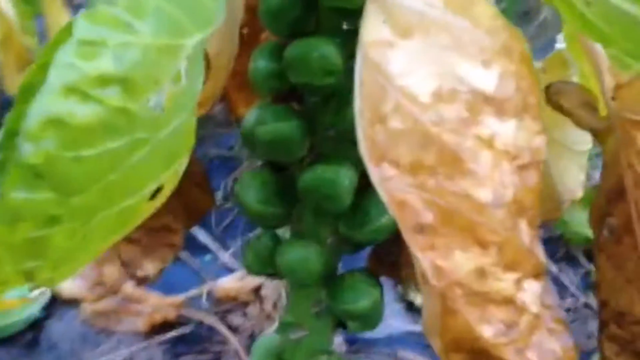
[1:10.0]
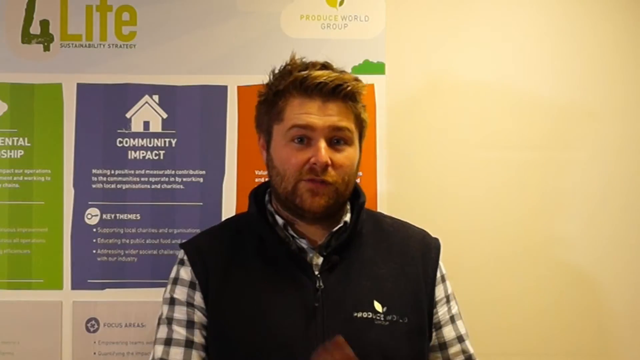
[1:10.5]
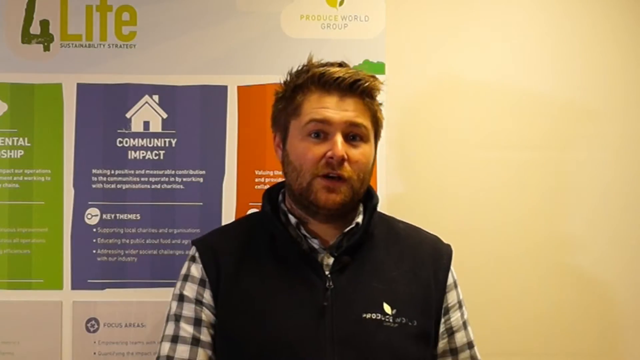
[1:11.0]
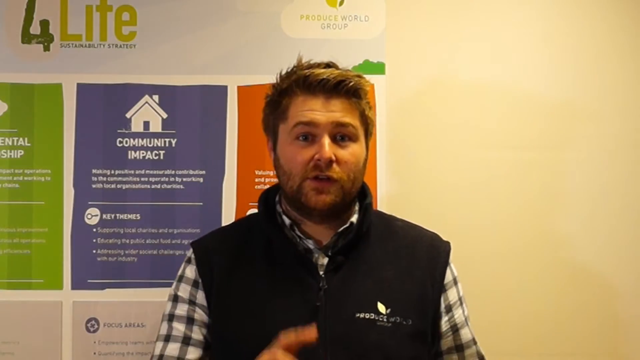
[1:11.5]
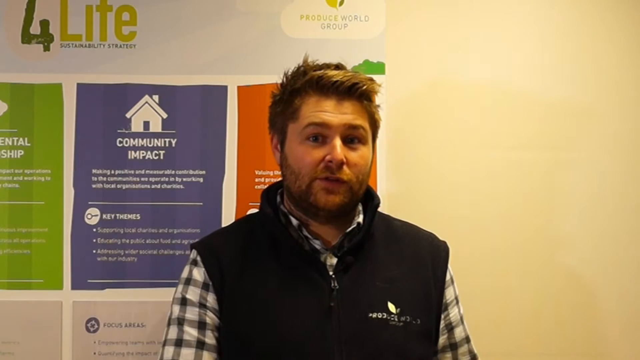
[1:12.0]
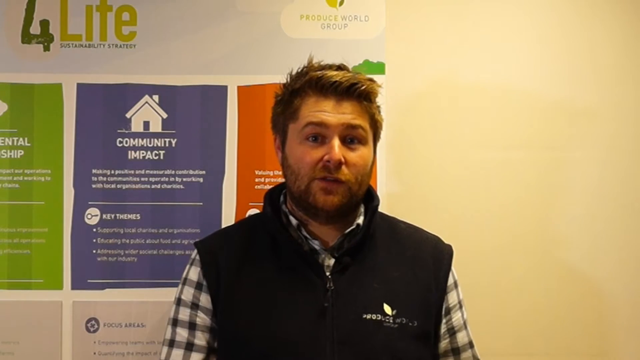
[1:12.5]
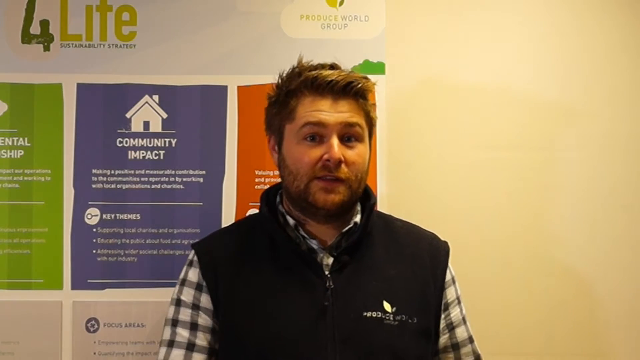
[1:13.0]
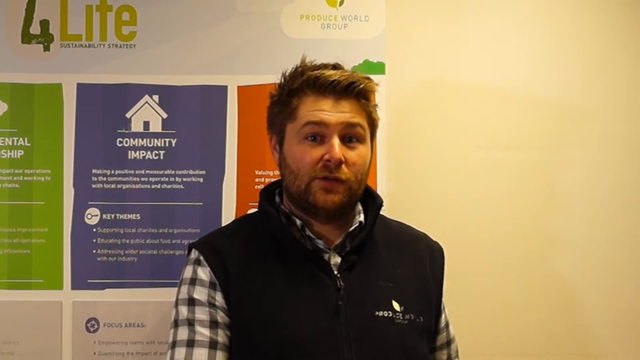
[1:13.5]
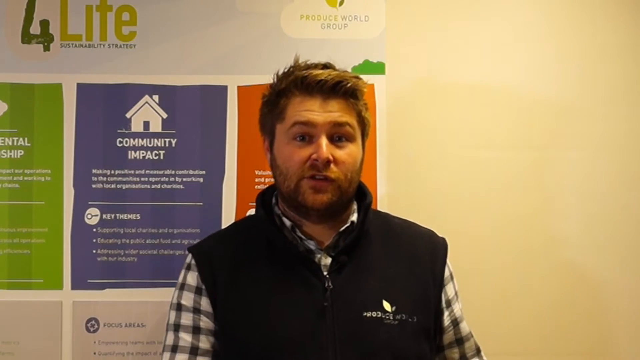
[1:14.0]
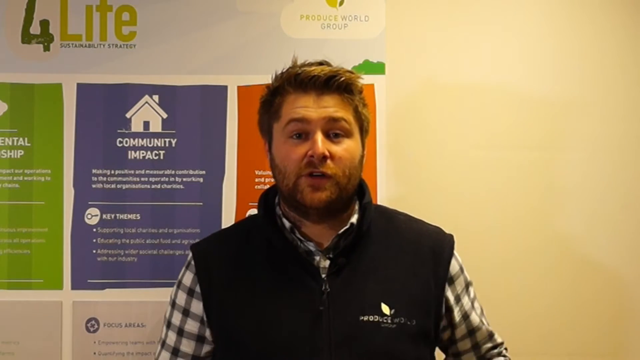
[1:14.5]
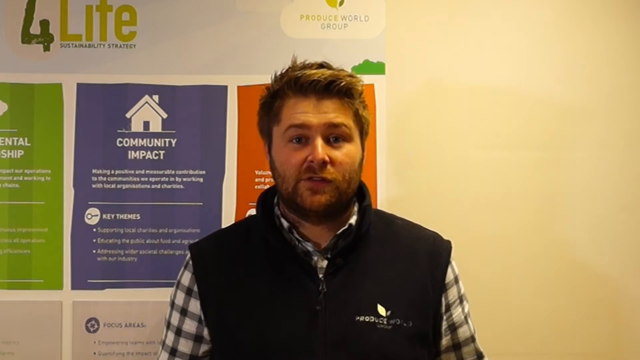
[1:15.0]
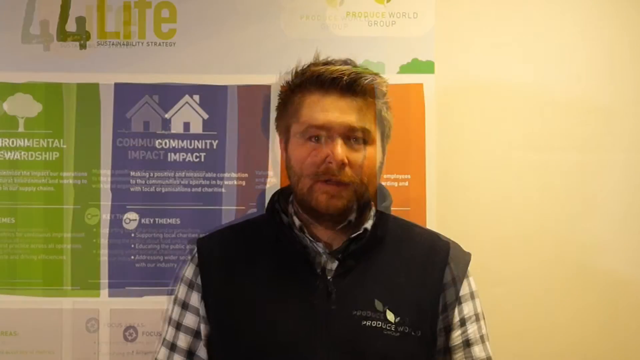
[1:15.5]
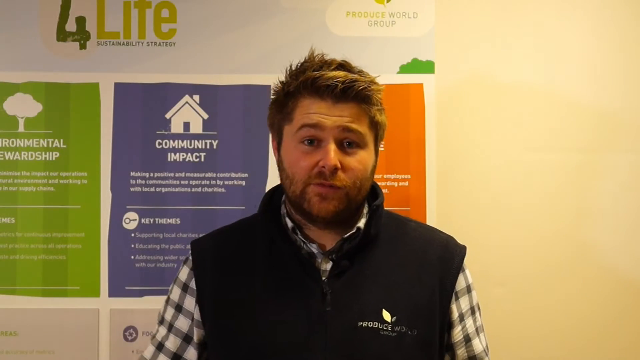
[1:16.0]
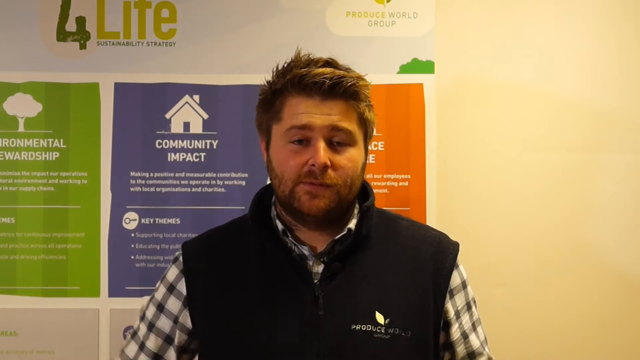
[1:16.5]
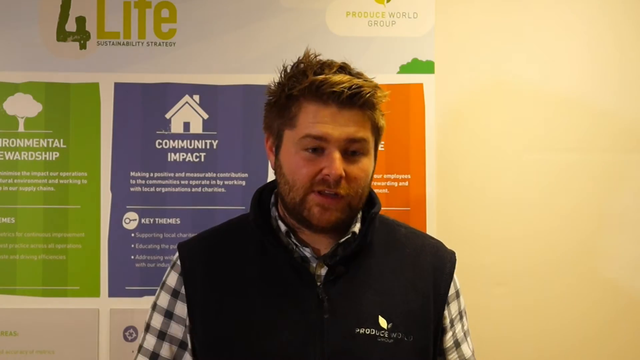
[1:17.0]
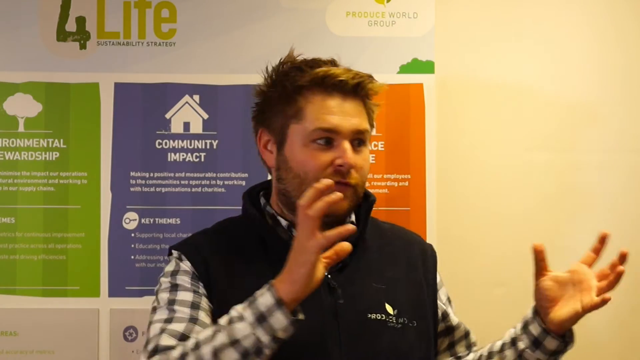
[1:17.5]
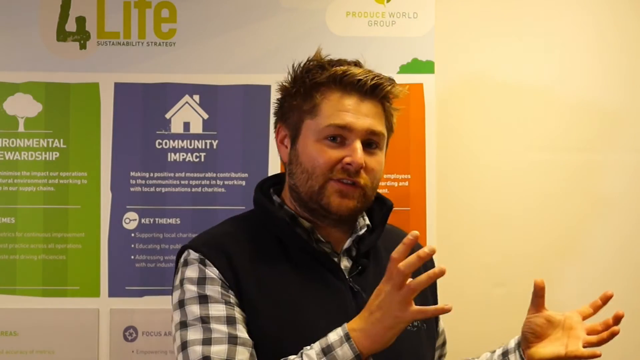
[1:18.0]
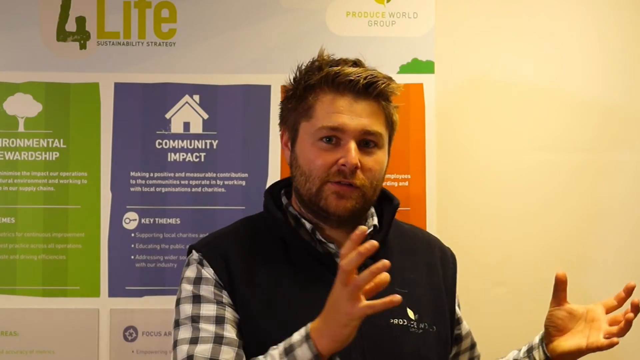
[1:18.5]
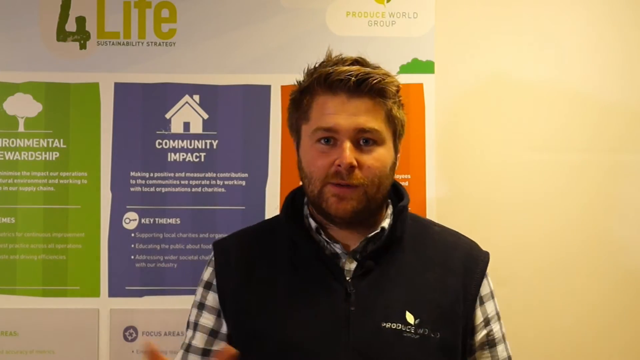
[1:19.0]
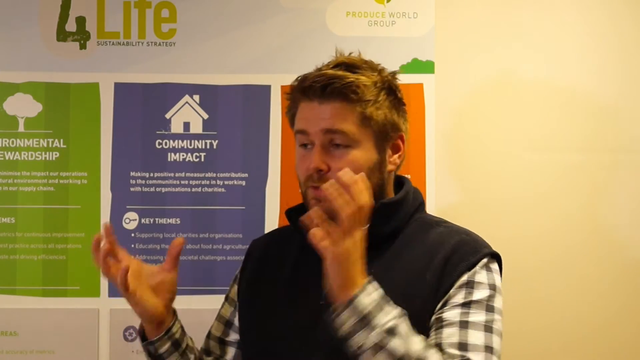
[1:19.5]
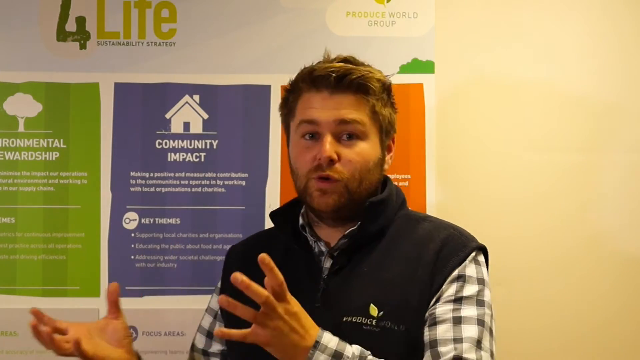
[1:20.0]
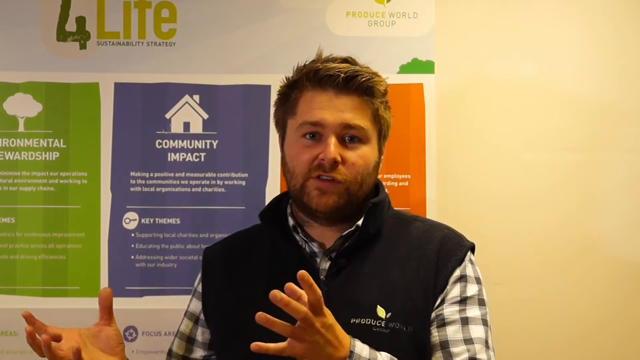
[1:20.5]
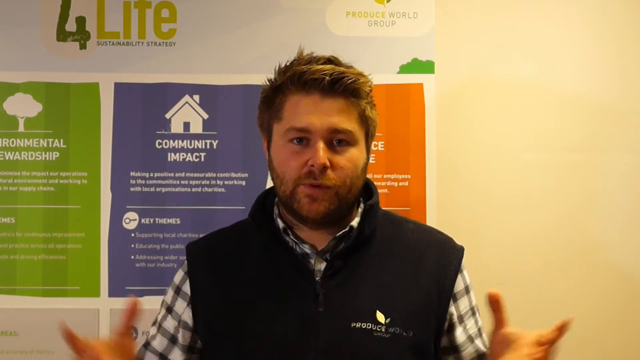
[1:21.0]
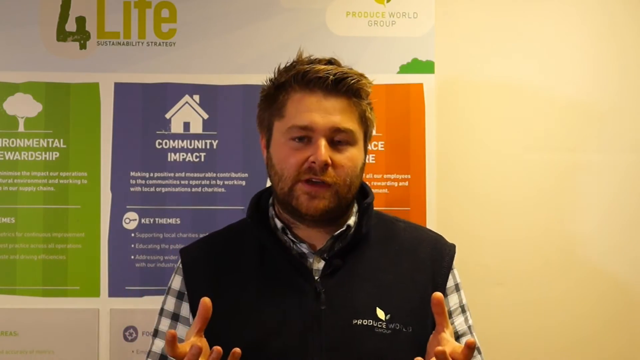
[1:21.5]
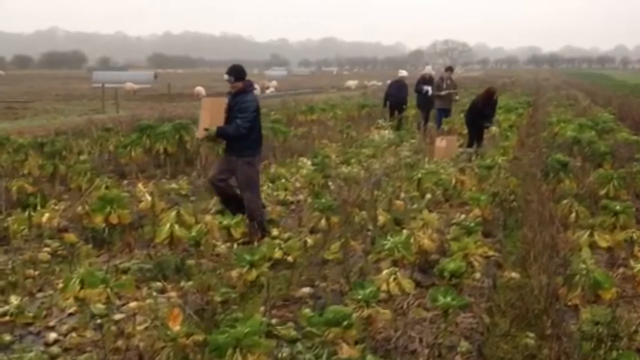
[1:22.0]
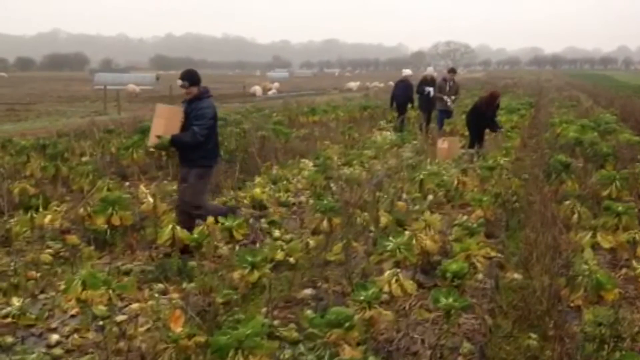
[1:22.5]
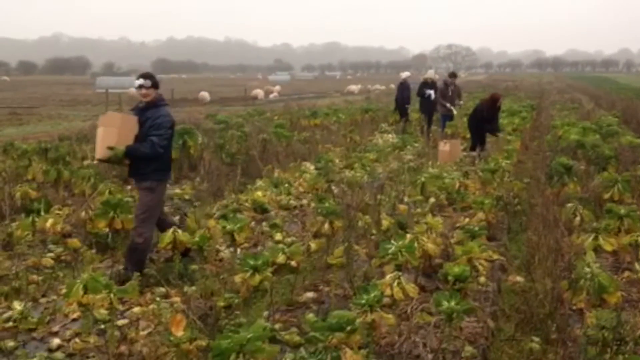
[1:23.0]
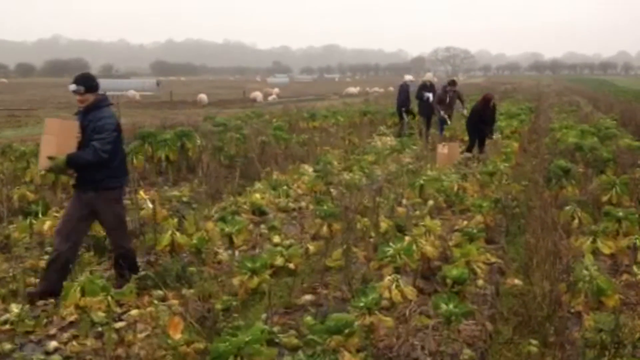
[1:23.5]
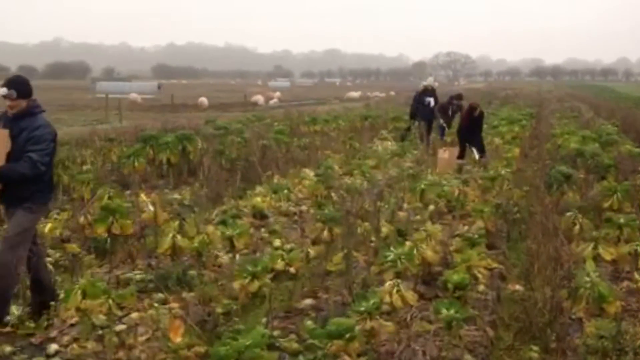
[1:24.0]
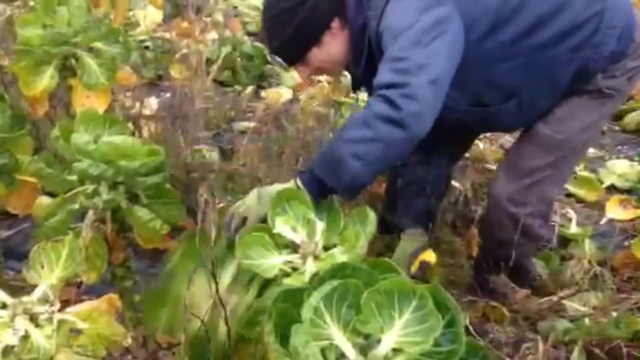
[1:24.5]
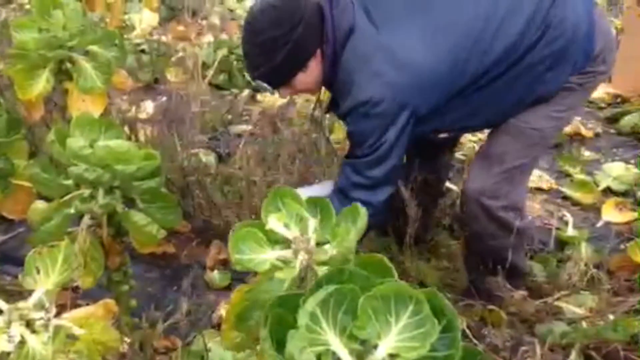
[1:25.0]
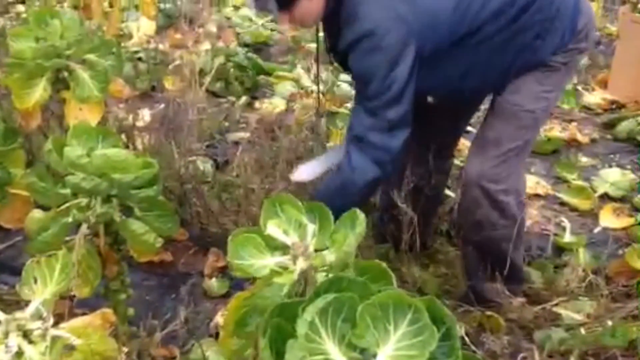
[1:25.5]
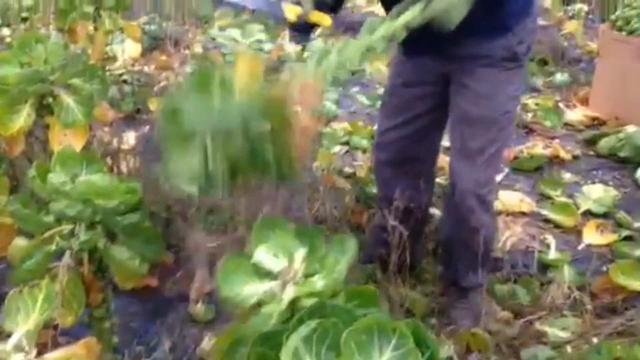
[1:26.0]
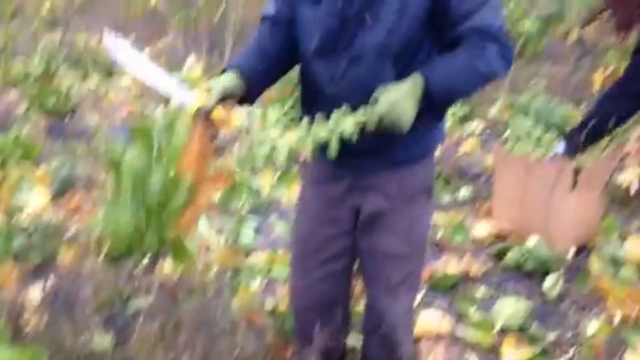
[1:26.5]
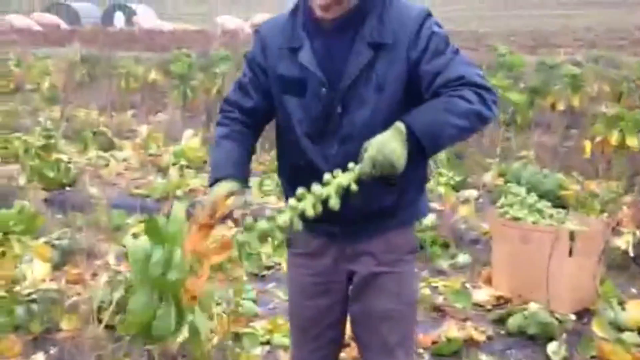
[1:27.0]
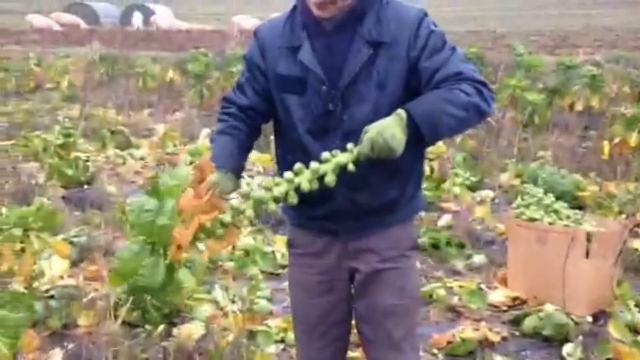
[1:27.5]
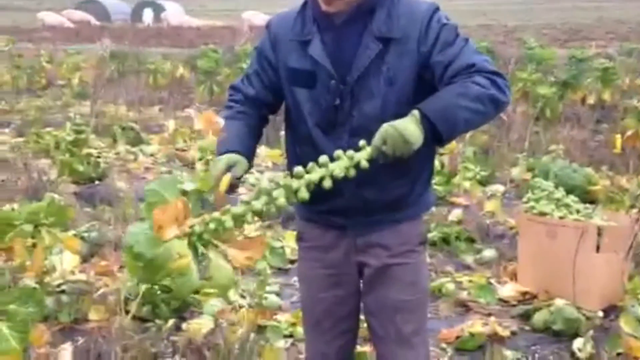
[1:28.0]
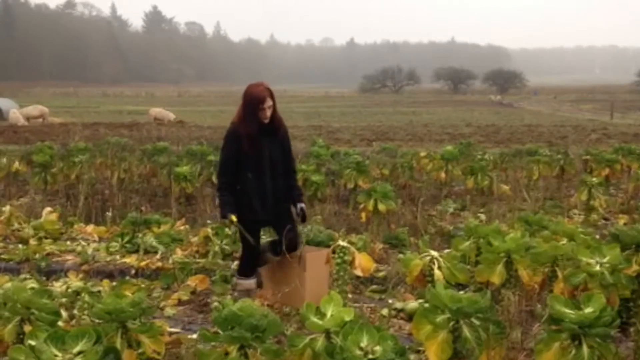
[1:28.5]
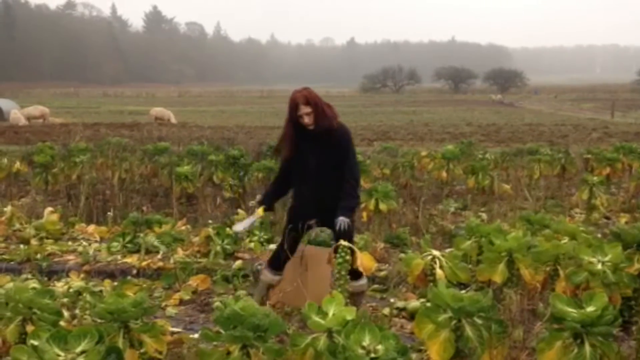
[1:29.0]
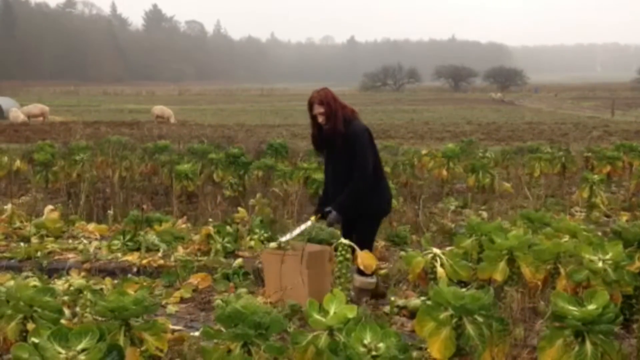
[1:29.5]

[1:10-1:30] A zoomed-up shot shows the plant, which looks like brussels sprouts, but it cuts immediately to Guy Thallon talking to the camera before the plant can be seen in full. He continues talking with the four life sustainability strategy behind him. People then work in a field cutting what look like cabbage heads, apparently brussels sprouts. Several workers use machetes to cut off the leaves, the browning leaves and excess leaves on top, leaving the stem with the little green bulbs on it. Some of the workers carry boxes of brussels sprouts, while others seem to be tending the soil.